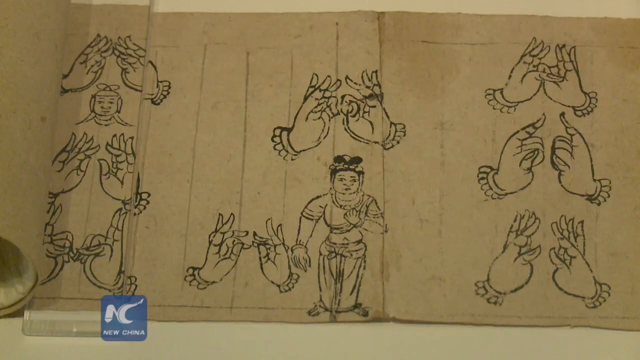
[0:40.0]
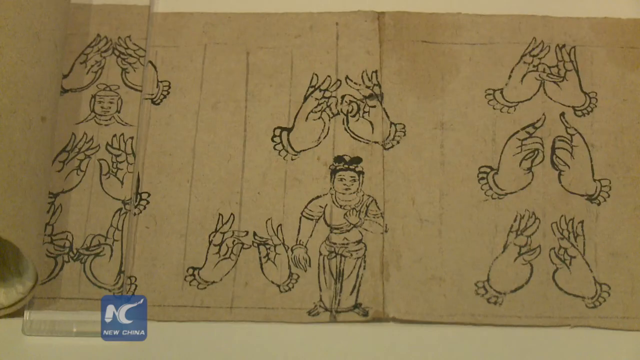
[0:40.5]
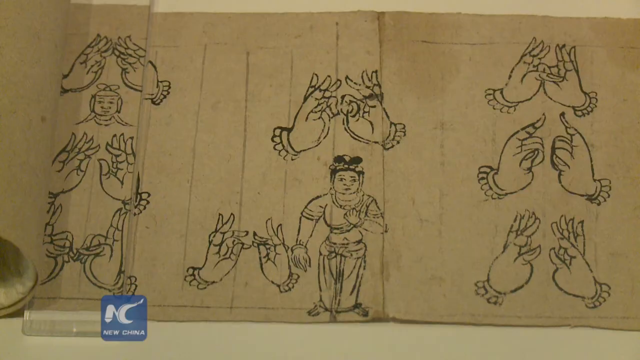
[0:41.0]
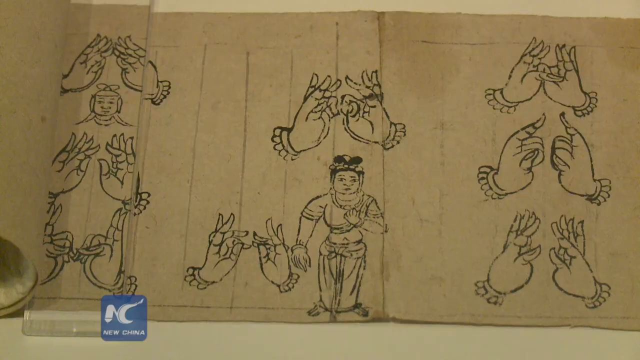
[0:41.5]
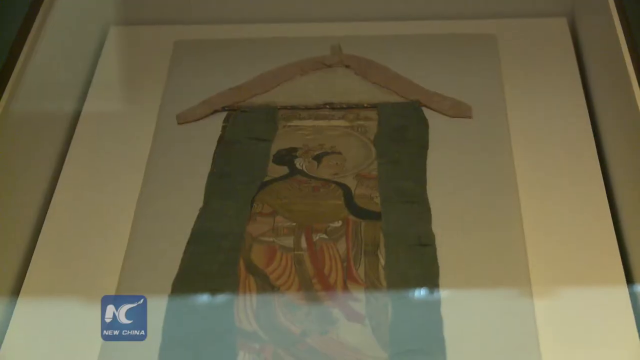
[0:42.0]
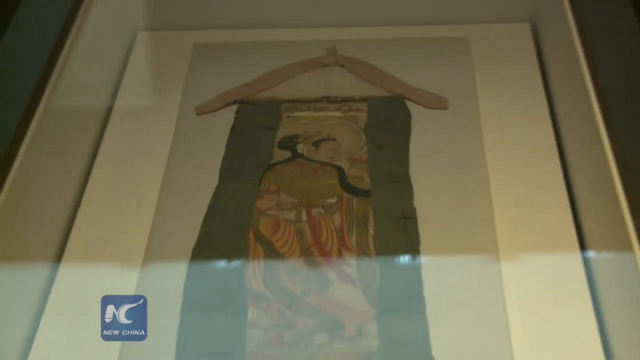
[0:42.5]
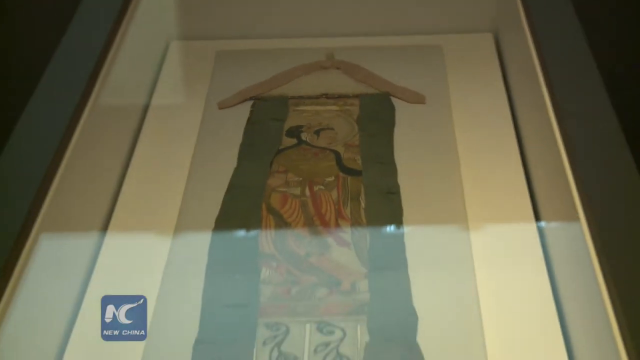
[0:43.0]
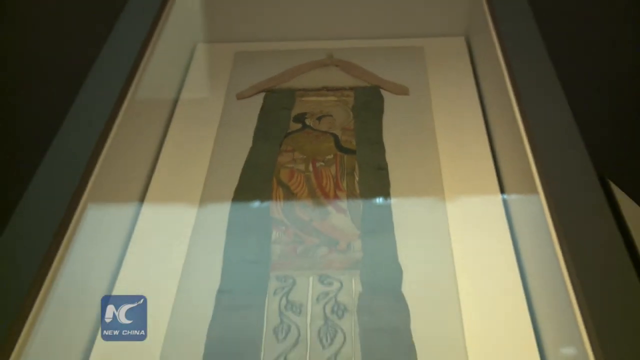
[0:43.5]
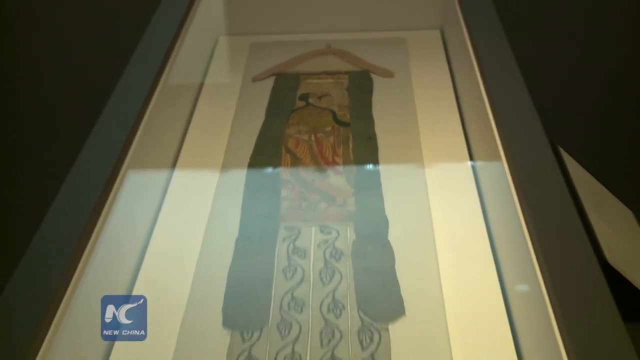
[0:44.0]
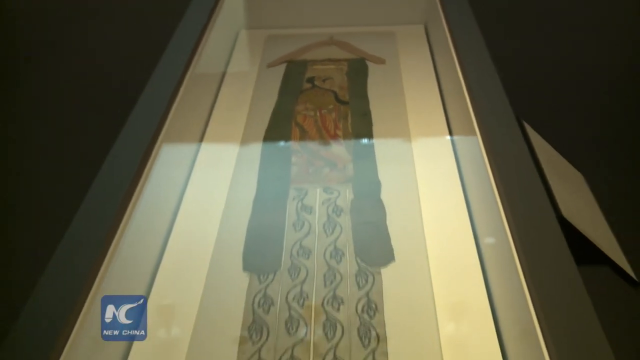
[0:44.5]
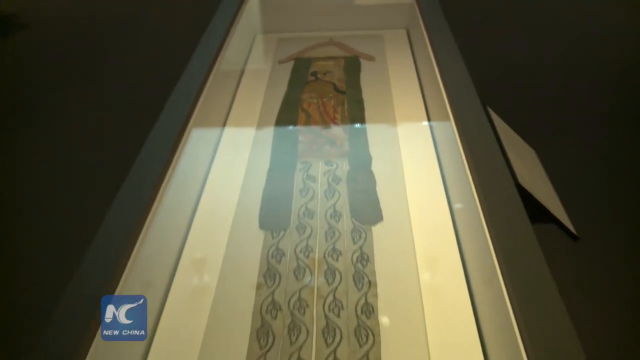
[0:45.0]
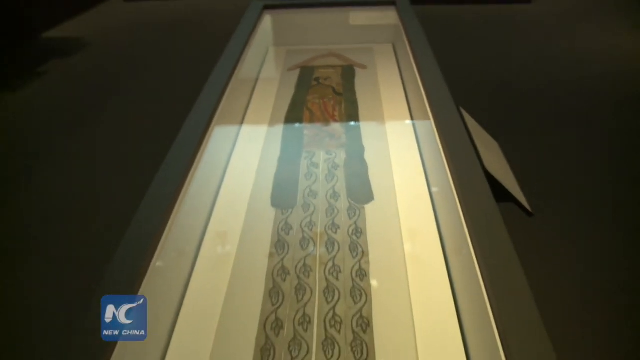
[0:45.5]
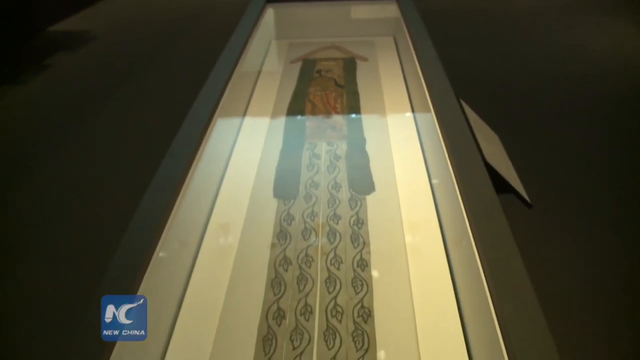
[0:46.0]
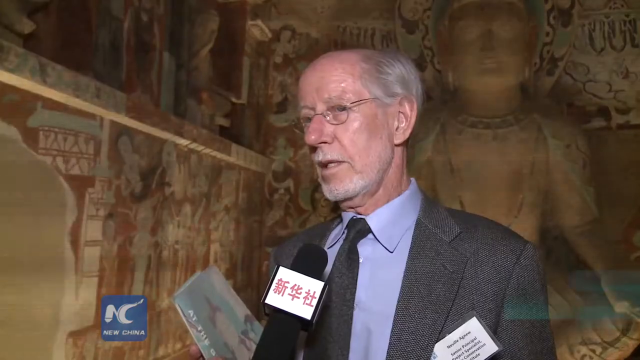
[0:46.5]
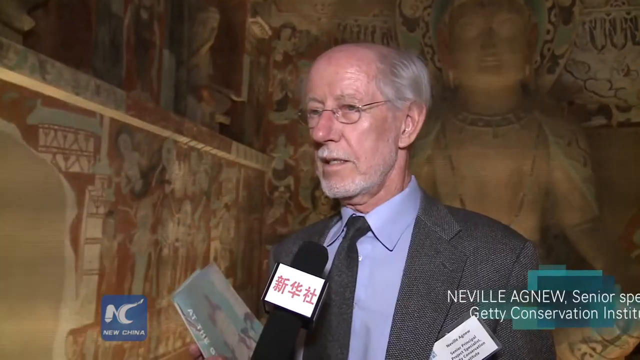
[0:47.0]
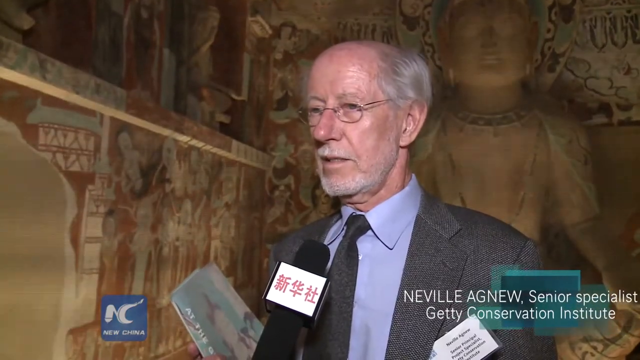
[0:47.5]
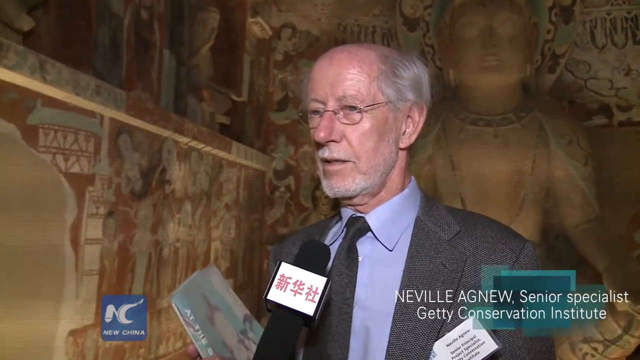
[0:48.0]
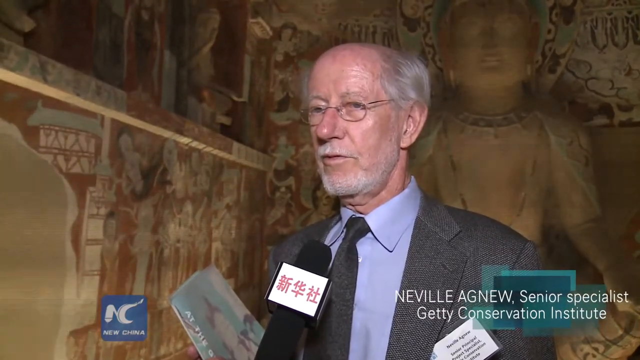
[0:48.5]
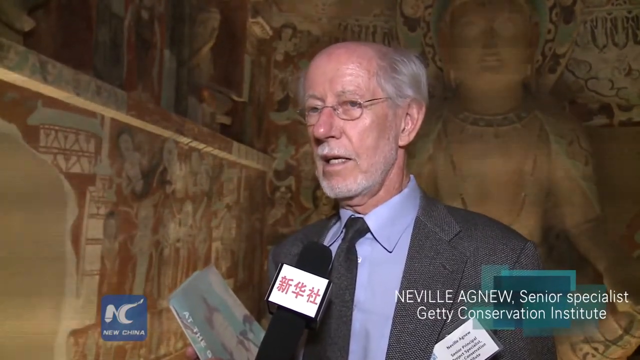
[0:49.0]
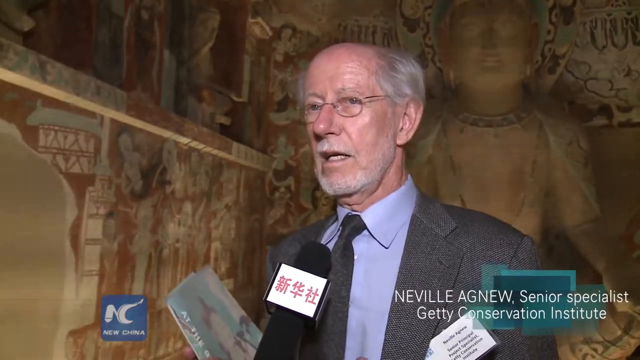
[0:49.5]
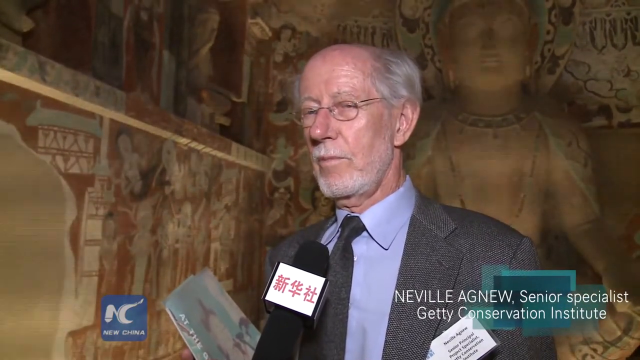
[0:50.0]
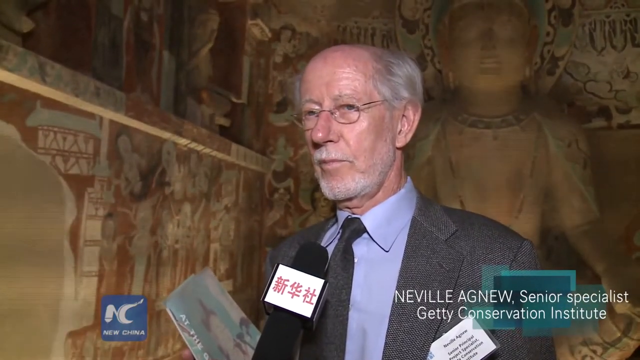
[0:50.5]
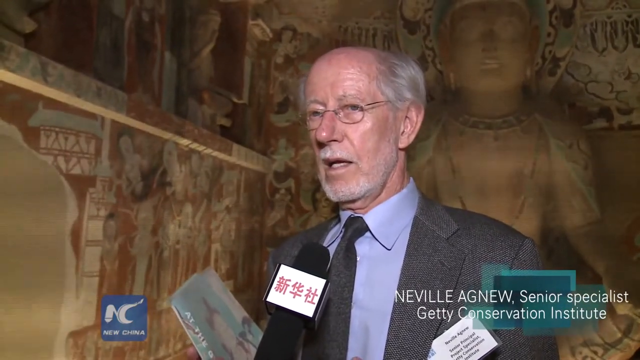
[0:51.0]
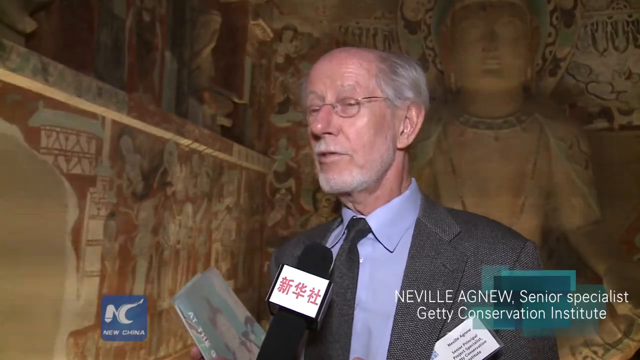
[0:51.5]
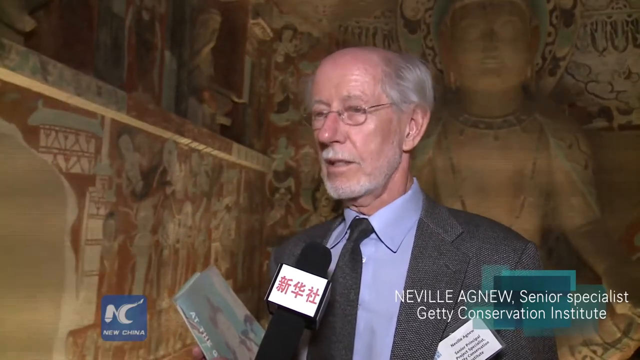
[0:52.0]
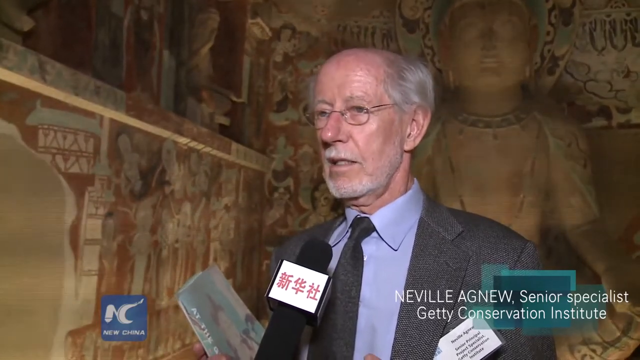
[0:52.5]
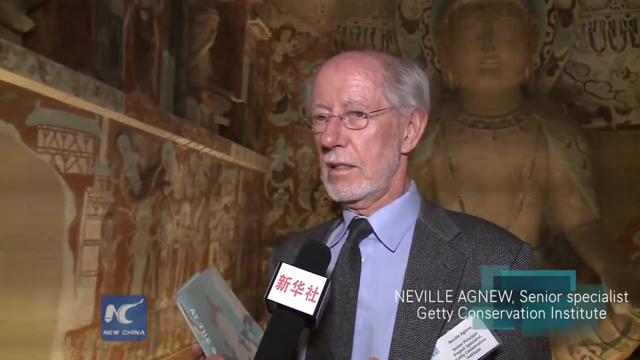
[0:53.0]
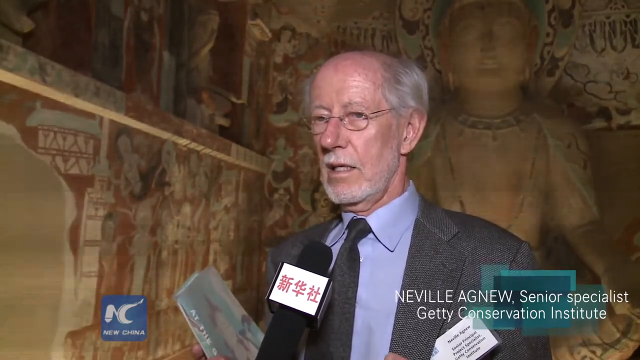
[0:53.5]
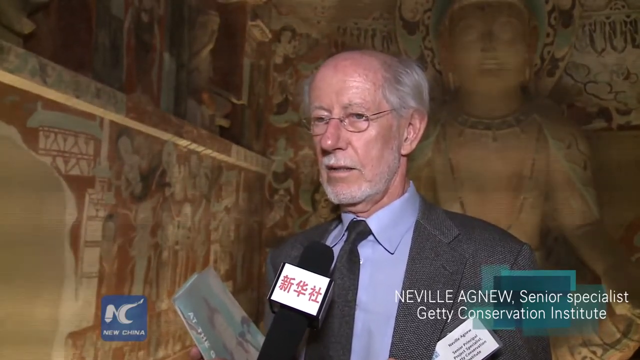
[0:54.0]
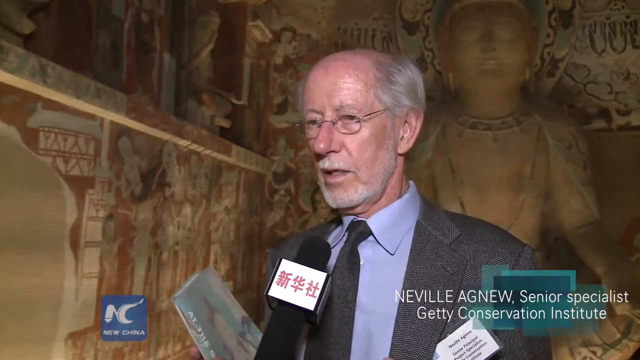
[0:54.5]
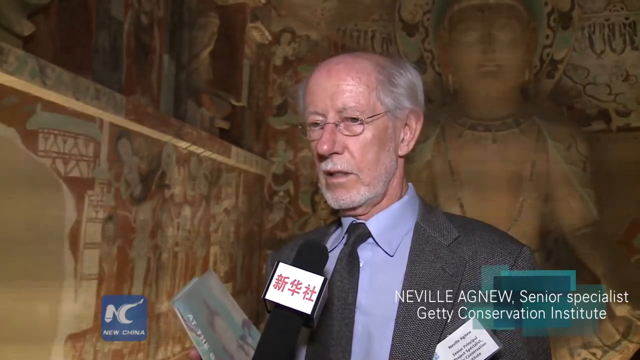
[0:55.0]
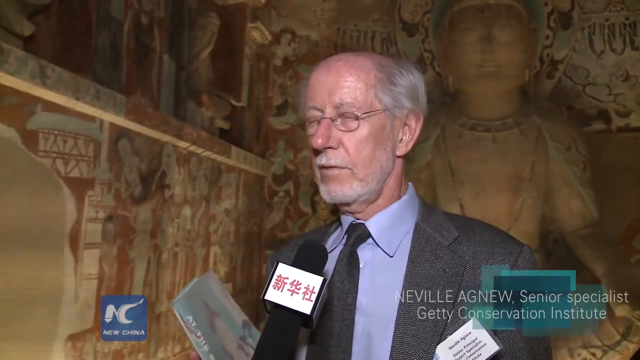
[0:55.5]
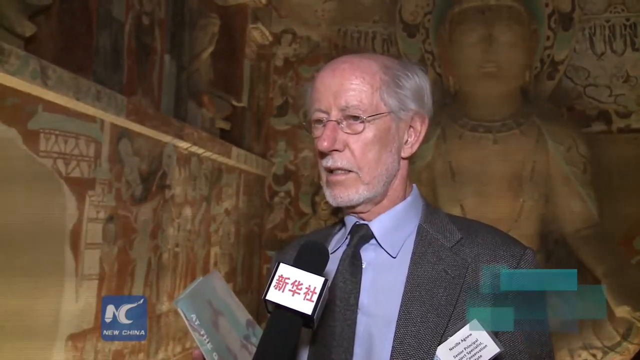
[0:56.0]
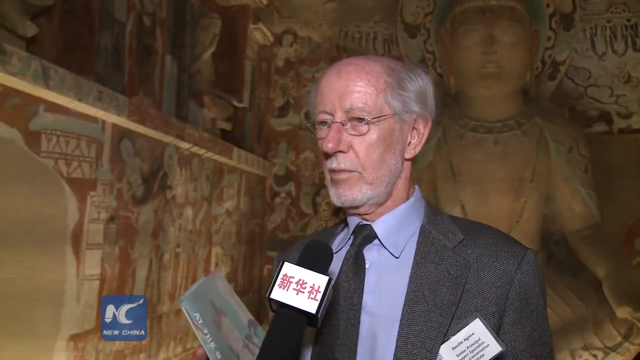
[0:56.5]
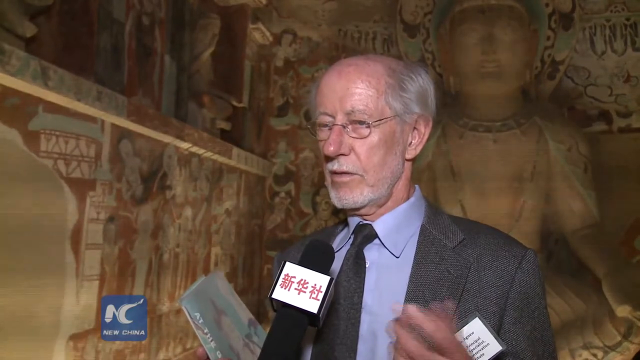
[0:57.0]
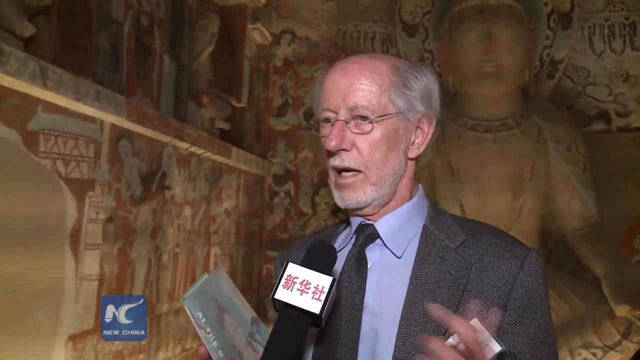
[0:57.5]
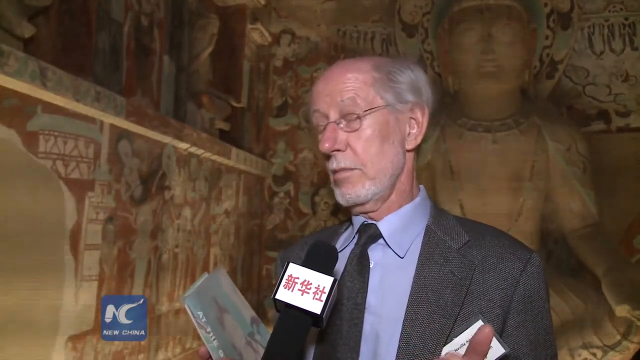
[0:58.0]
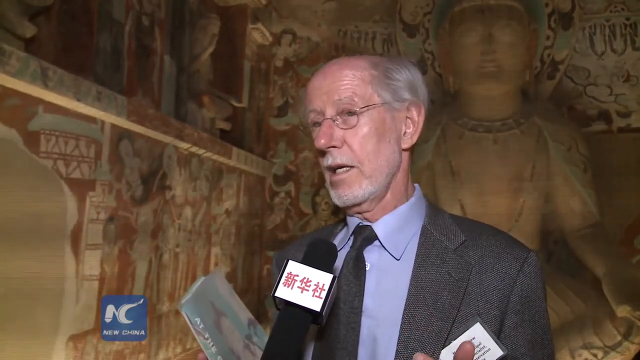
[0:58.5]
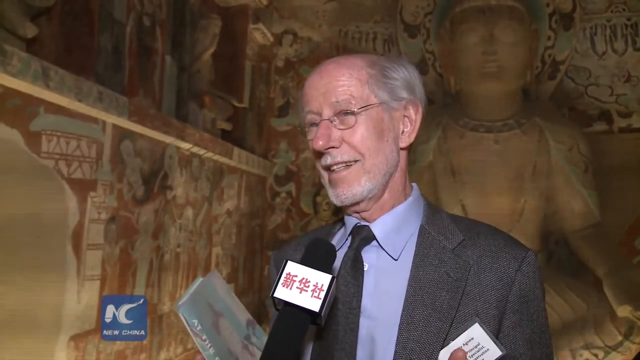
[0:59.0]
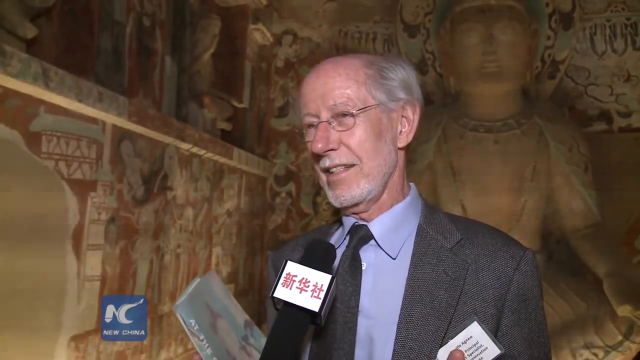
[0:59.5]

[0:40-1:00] The old scroll of hand signals is presented; altogether it appears to show eight different hand signals, with no clear indication of what they refer to. Next is a very large scroll or art design, not very wide but very long, covering an entire building's wall and covered in glass. A man who is speaking is identified as Neville Agnew, a senior specialist at Getty Conservation Institute. Behind him there is a lot of iconography, including a big statue, and a great deal of calligraphy in an almost Egyptian style, along with a lot of imagery apparently of things that were being done, shown without context.